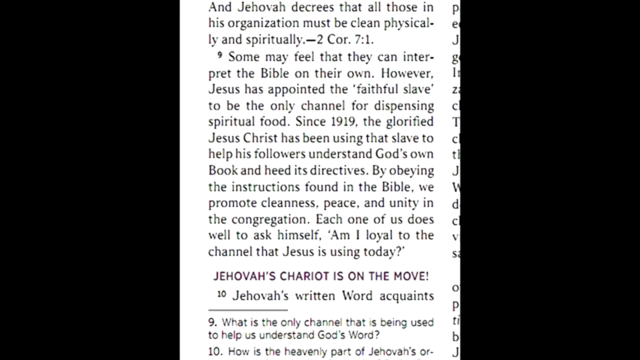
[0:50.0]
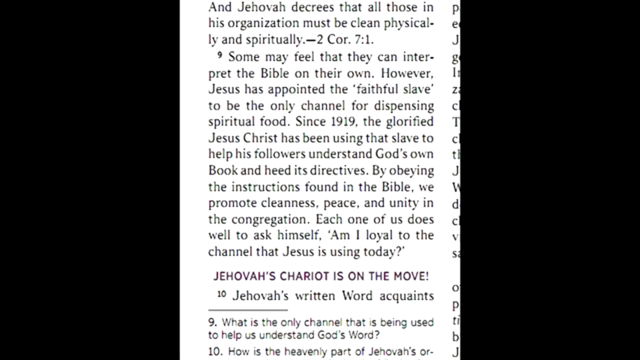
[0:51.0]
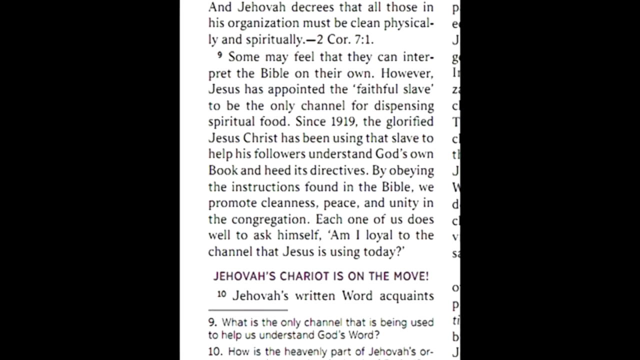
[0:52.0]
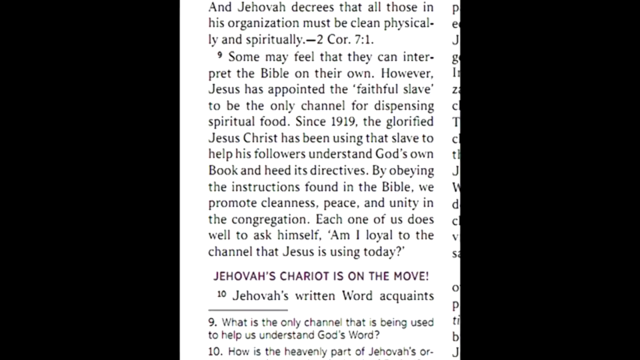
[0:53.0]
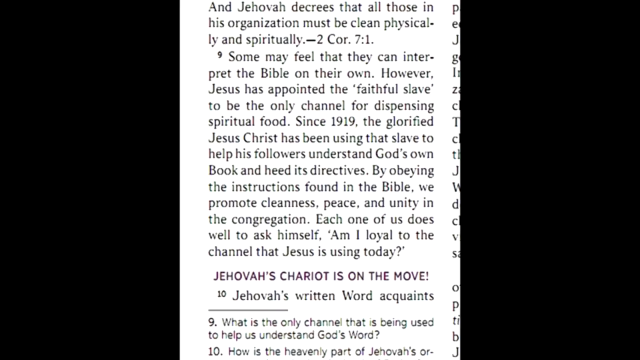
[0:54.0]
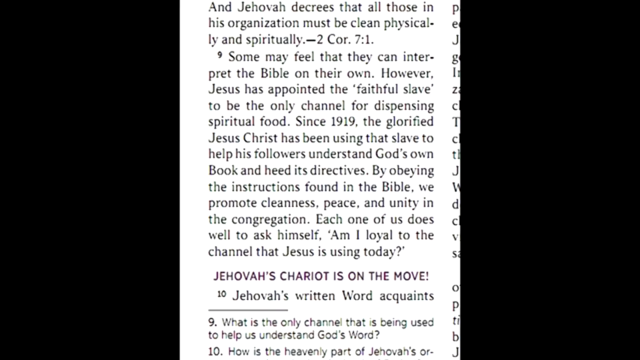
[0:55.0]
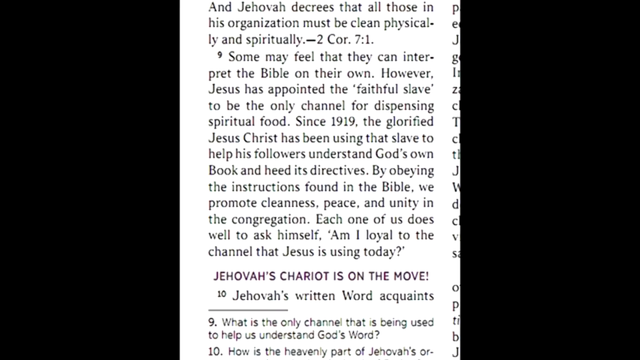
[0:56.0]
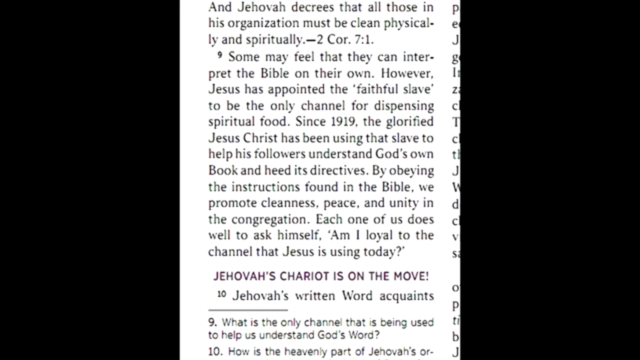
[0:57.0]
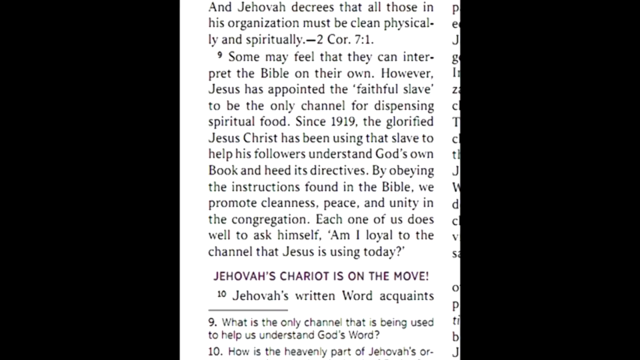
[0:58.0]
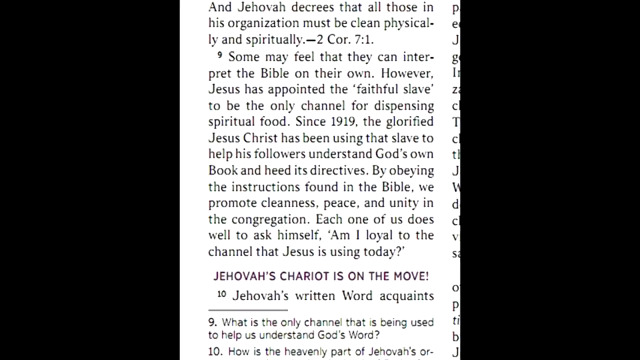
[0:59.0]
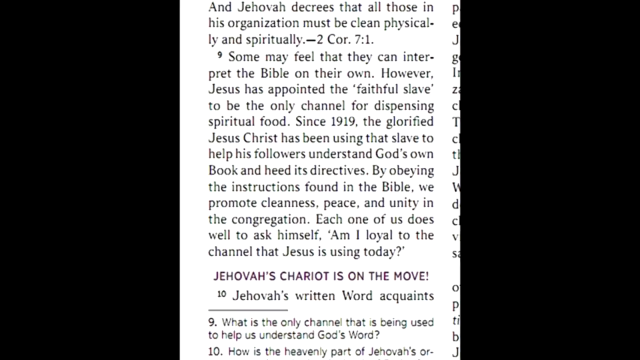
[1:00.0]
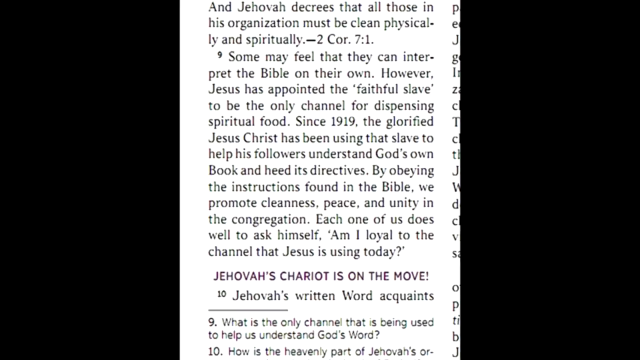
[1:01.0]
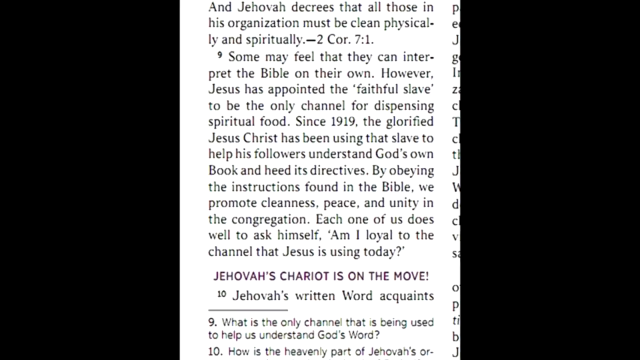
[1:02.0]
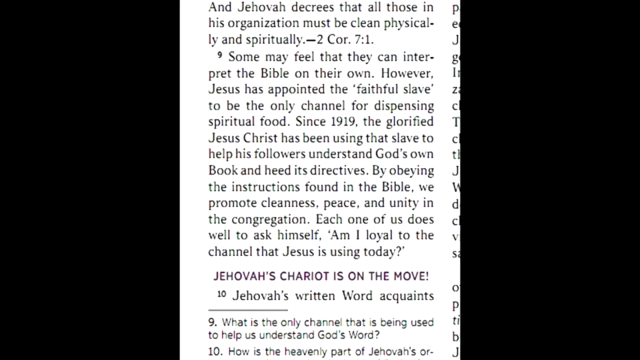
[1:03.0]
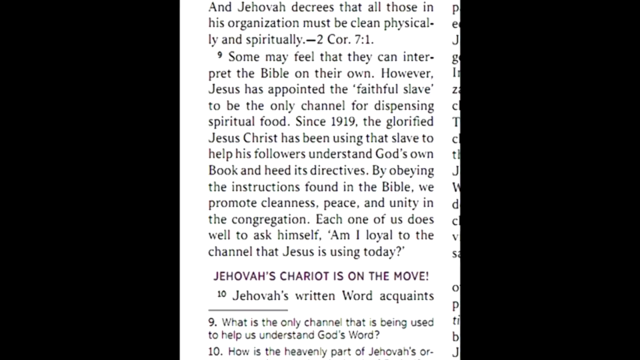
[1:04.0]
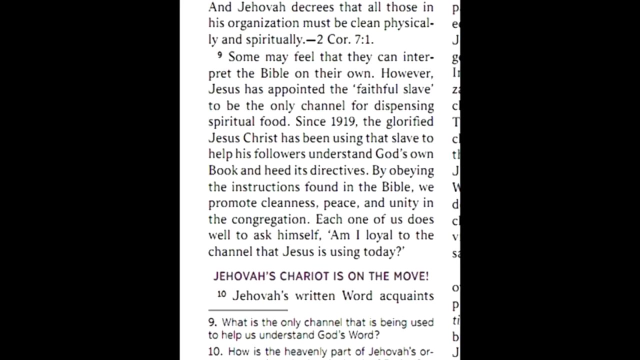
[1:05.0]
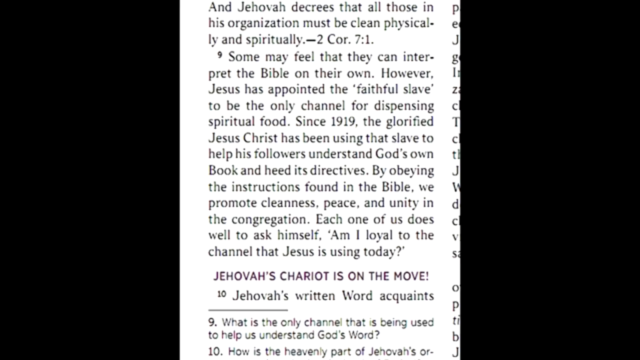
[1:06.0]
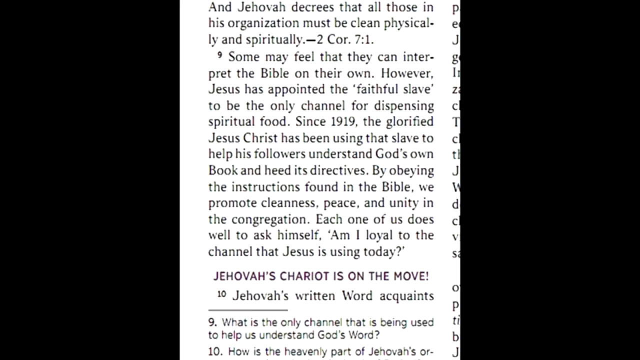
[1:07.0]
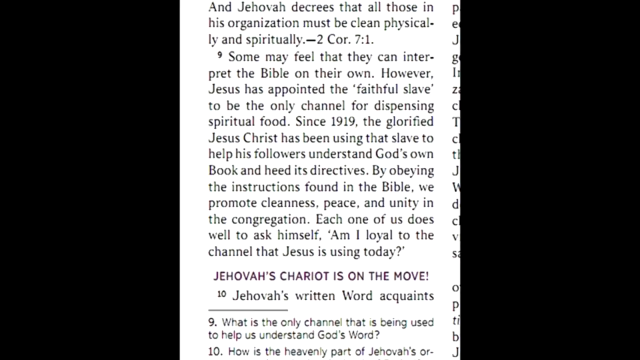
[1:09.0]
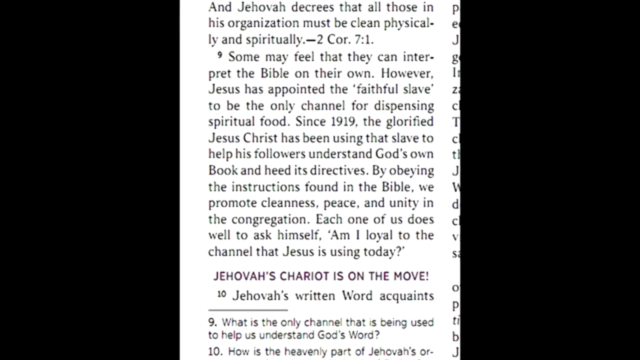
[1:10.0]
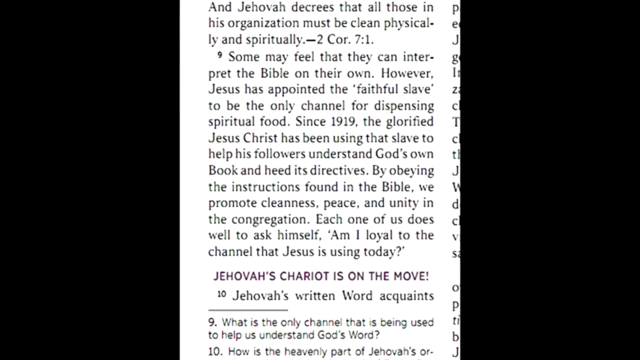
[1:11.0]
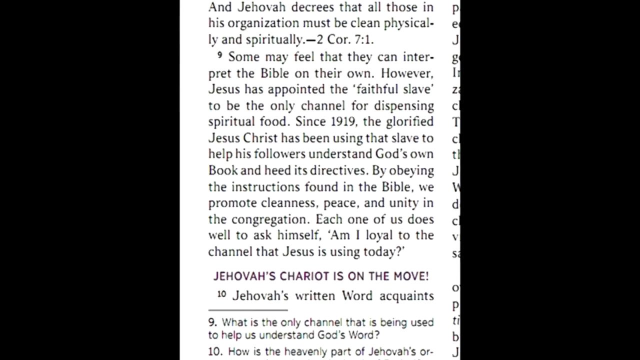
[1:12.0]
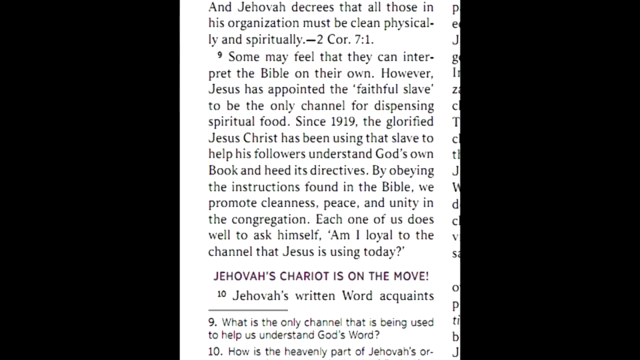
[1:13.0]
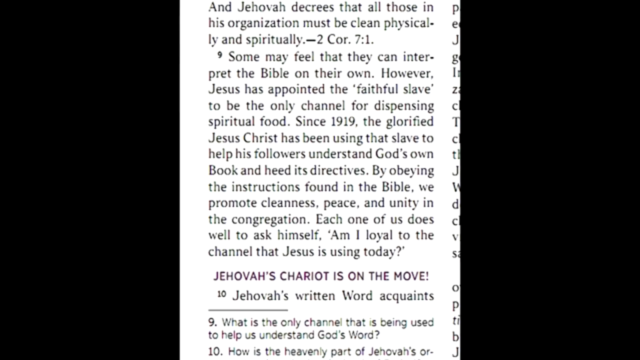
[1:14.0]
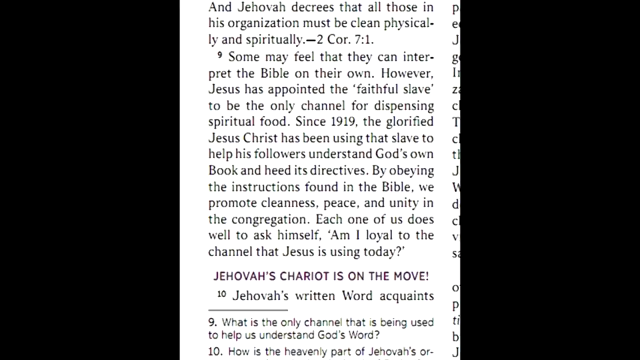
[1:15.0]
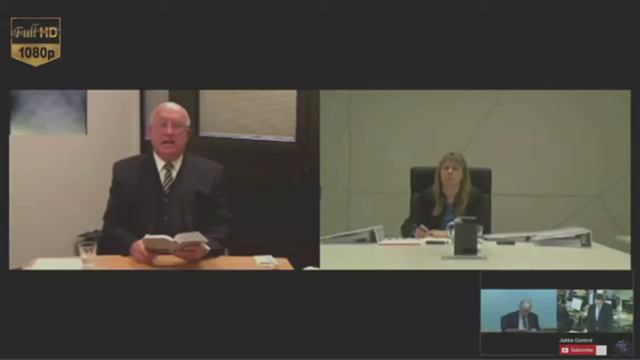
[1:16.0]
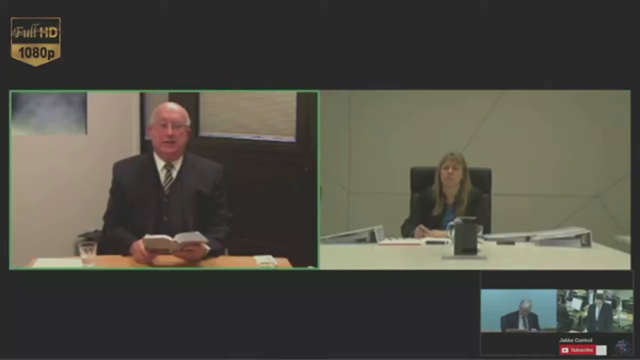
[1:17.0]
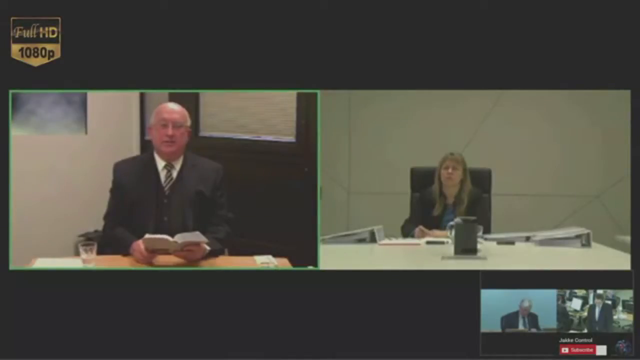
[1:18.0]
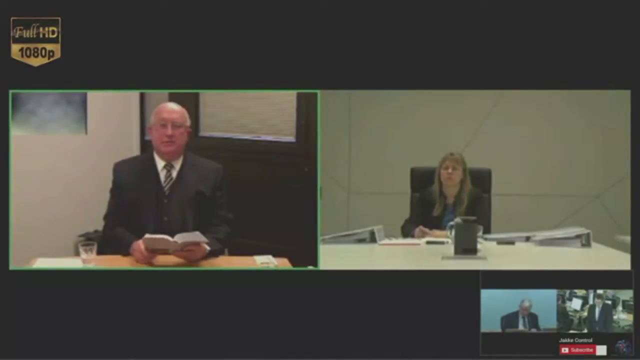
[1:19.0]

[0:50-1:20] The video returns to the page of the book, zoomed in on the same passage, with a black border on the left and right sides, focusing on it for a moment. It then cuts back to the man and woman. He is on the left in a small square video, with grey hair, a black suit and tie, and a white shirt underneath. Behind him to the left is the bottom end of a painting, and behind him to the right is a big wooden door. In front of him is a wooden table. He holds a book out in front of him with both hands on it, and a glass of water is to his left. She is in a room with a white wall and a big white desk across the front, with little folders and other things scattered across it. She has blonde hair past her shoulder and wears a black suit. Her right arm goes down with the elbow on the table and then across in front of her; her other arm goes down with the elbow forward and her hand holding a pen on the table.